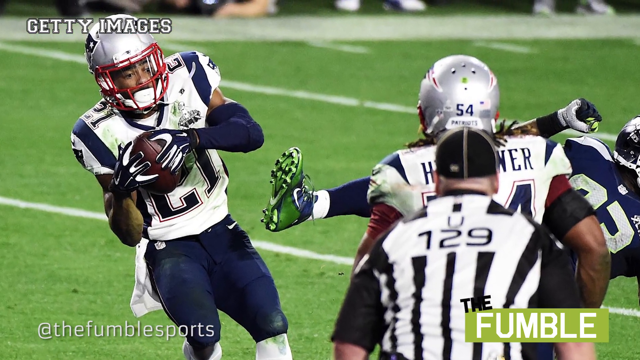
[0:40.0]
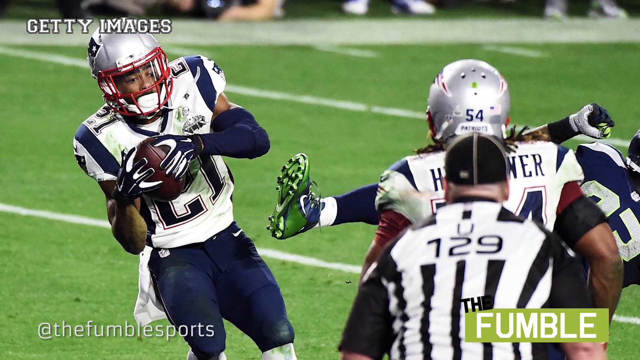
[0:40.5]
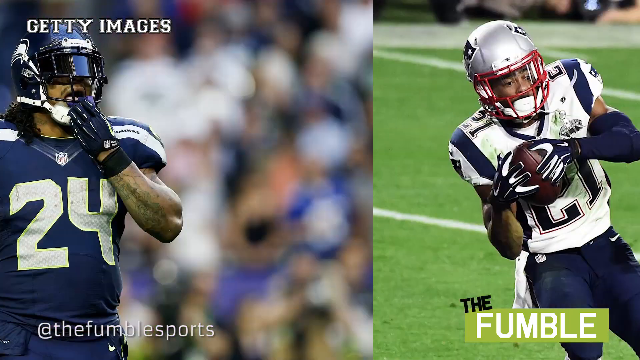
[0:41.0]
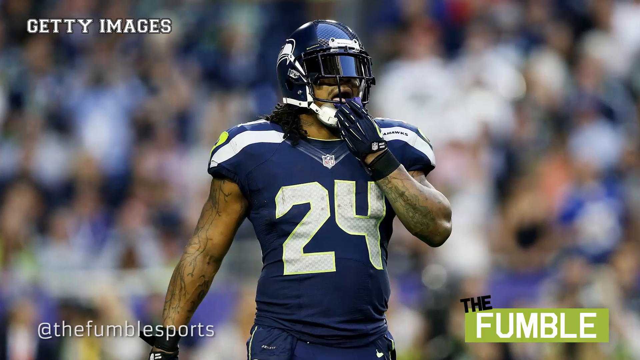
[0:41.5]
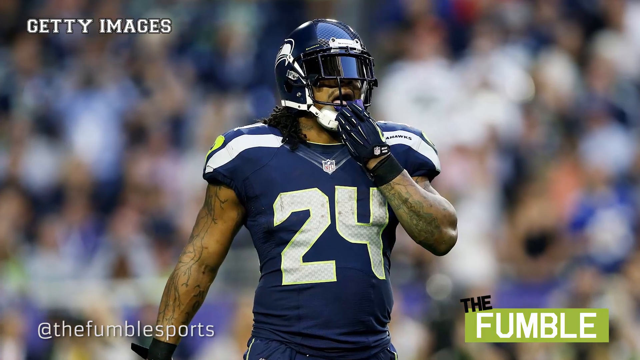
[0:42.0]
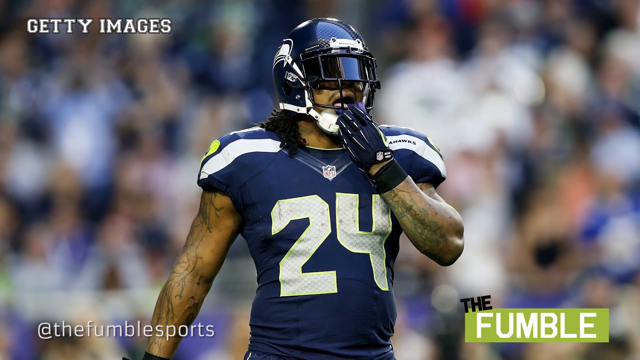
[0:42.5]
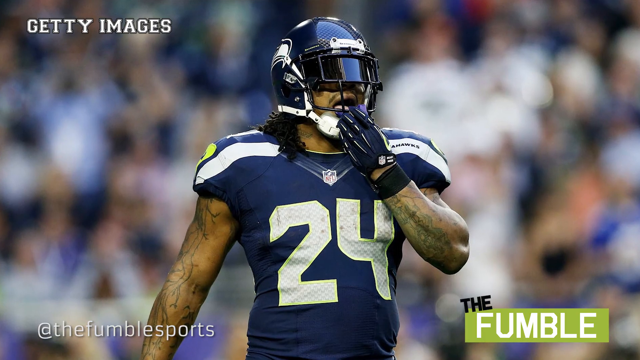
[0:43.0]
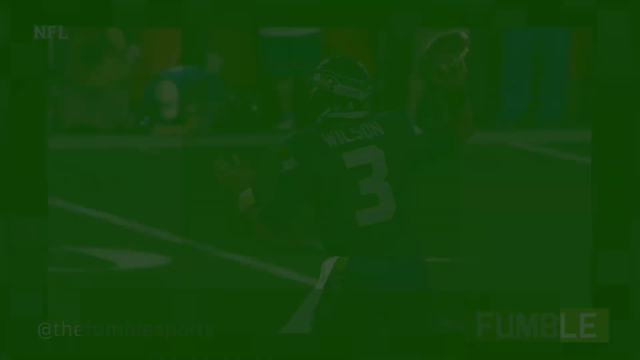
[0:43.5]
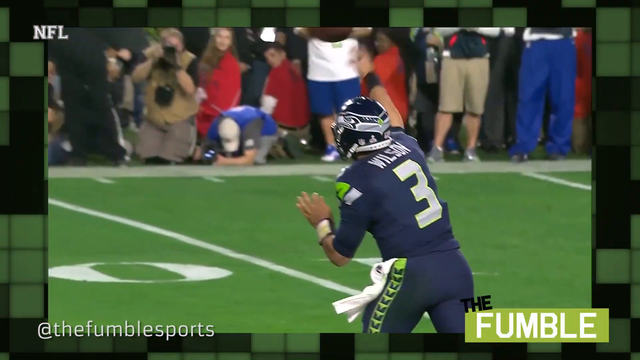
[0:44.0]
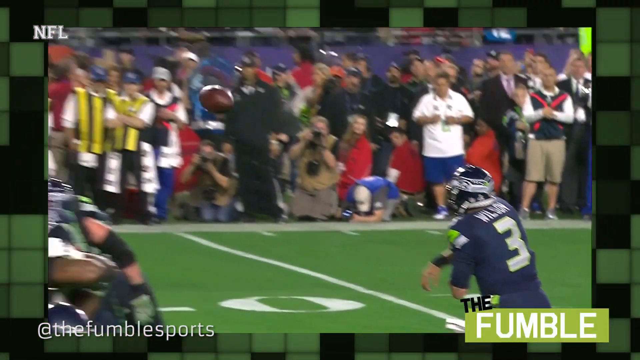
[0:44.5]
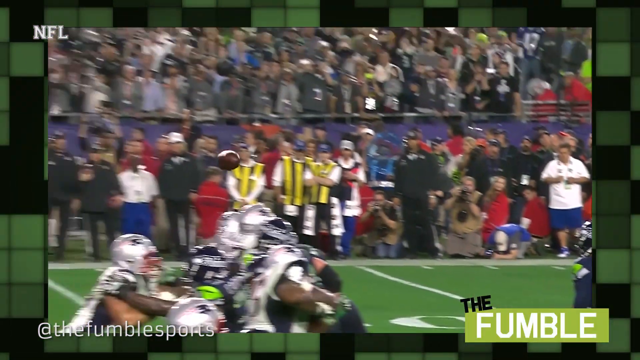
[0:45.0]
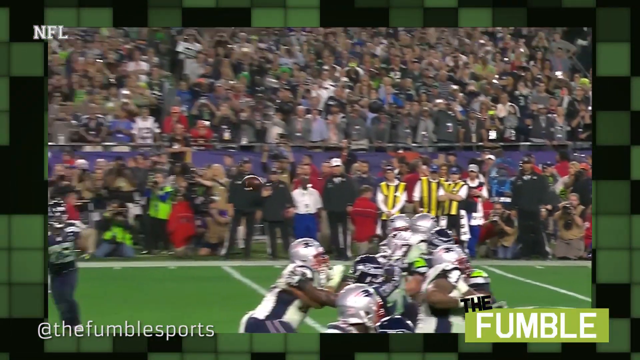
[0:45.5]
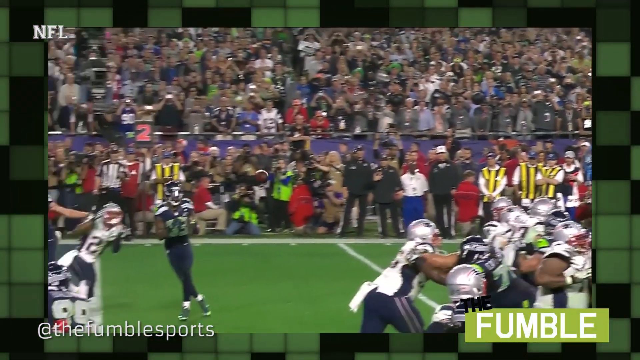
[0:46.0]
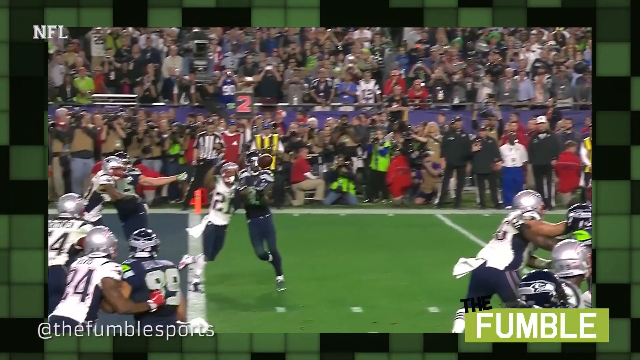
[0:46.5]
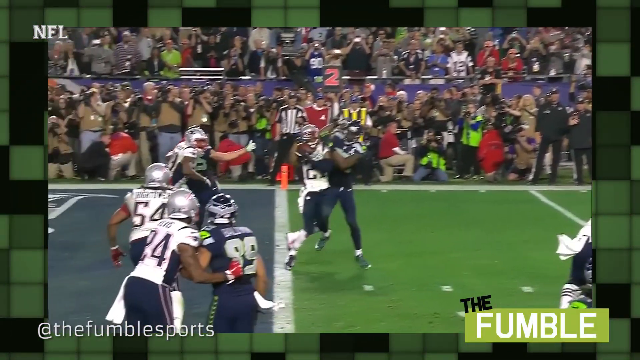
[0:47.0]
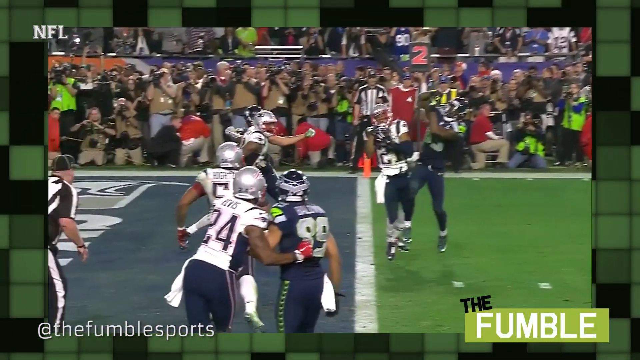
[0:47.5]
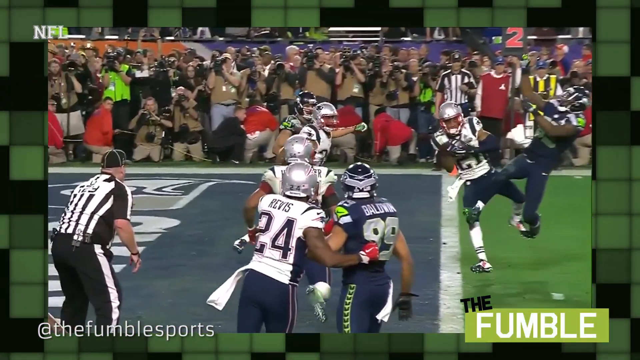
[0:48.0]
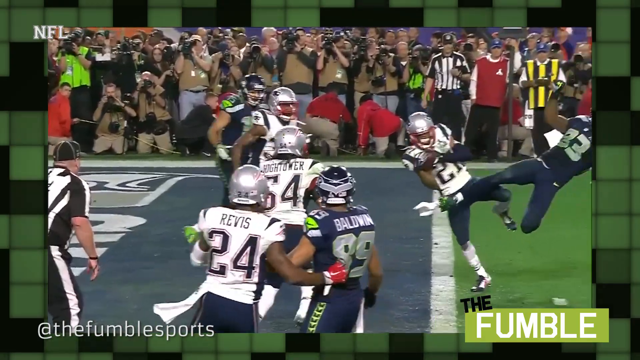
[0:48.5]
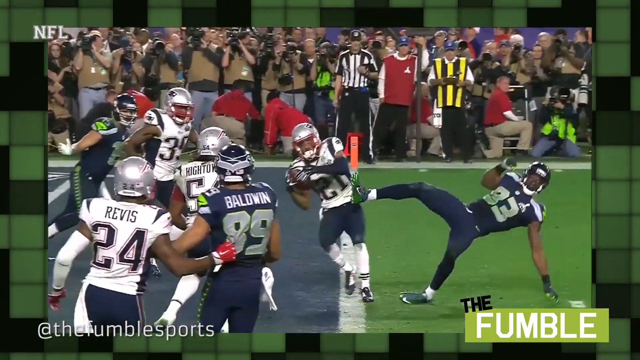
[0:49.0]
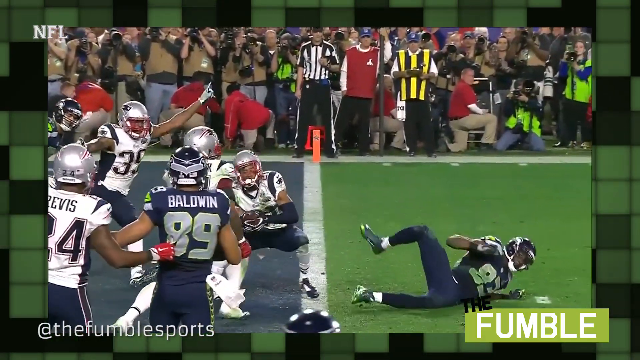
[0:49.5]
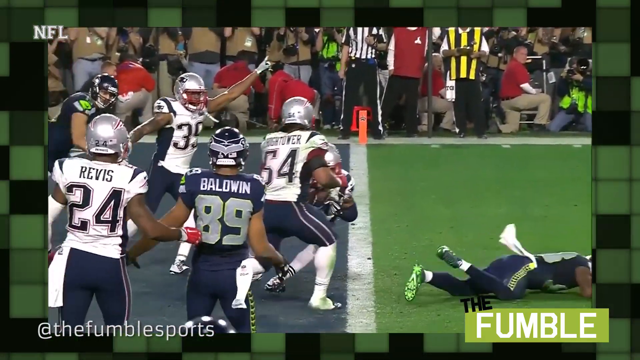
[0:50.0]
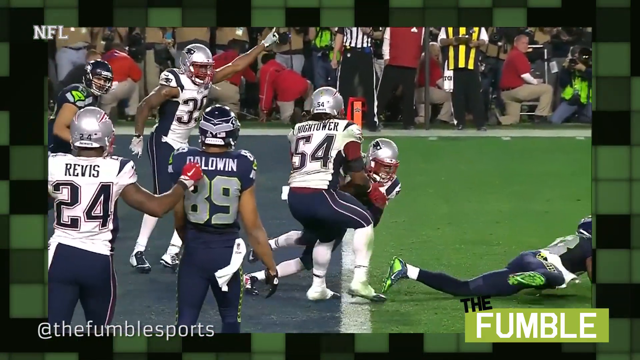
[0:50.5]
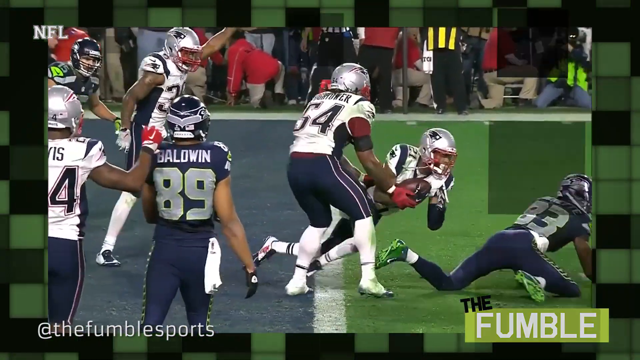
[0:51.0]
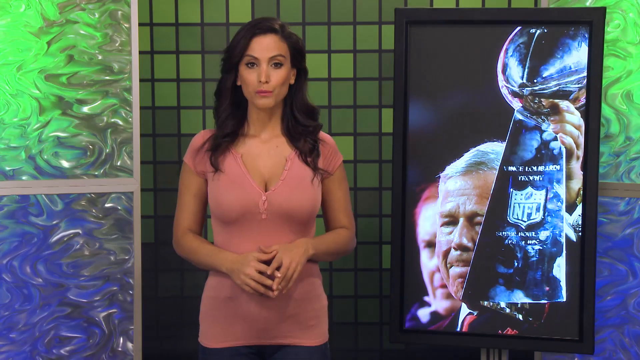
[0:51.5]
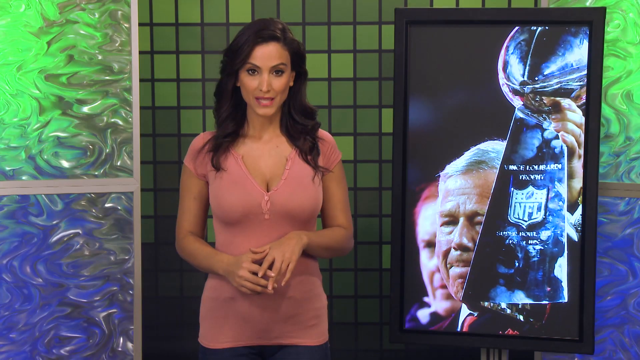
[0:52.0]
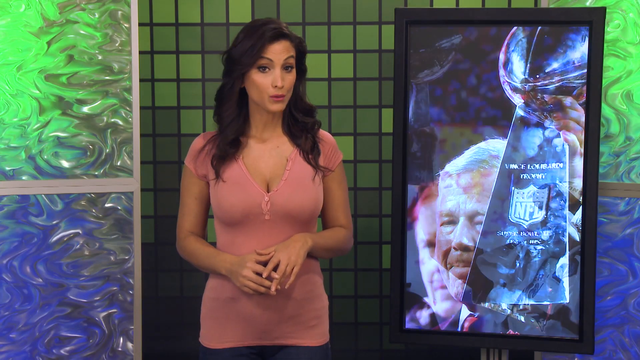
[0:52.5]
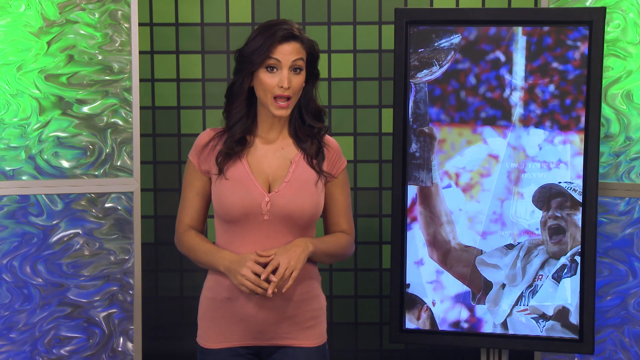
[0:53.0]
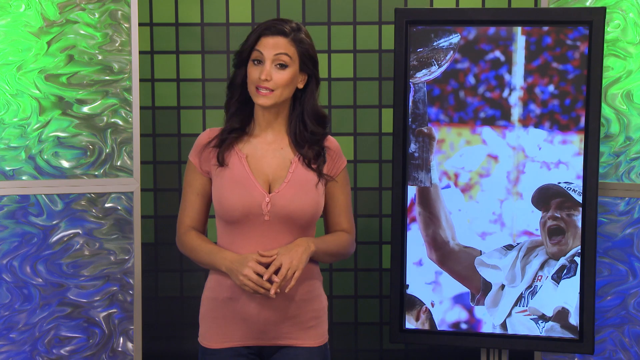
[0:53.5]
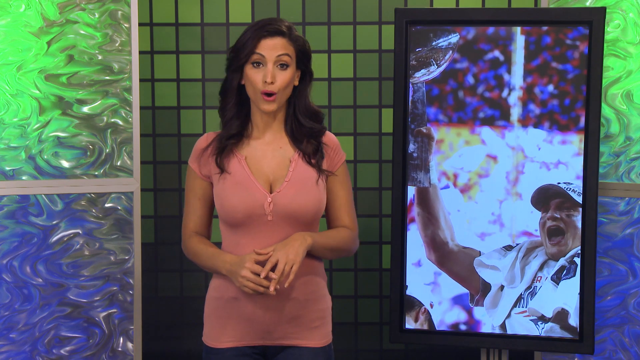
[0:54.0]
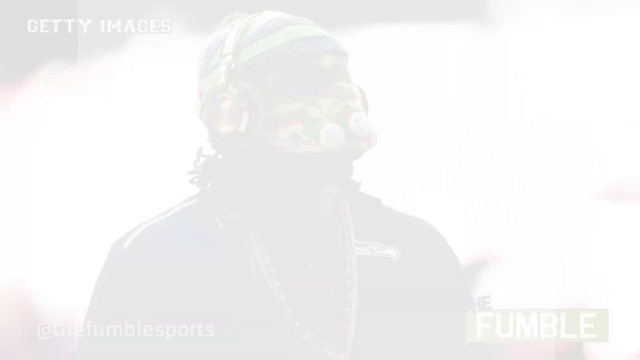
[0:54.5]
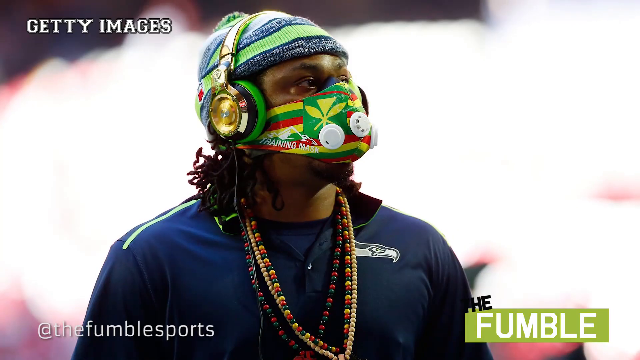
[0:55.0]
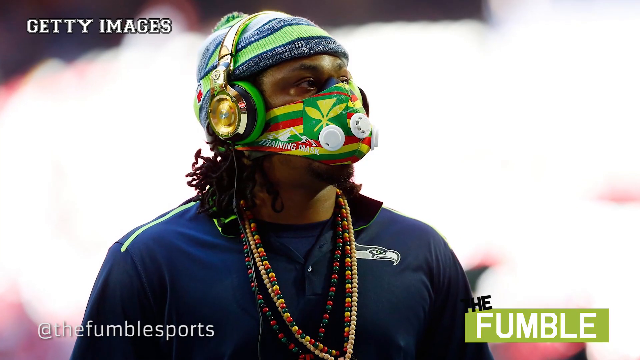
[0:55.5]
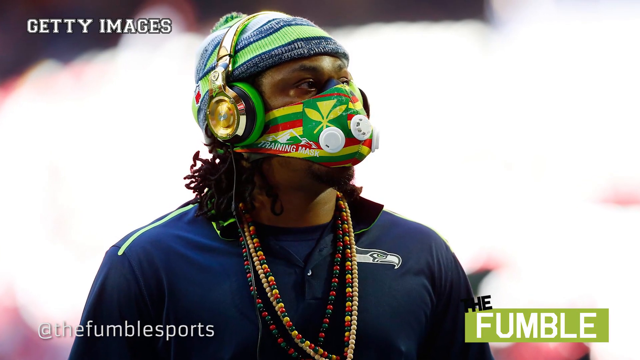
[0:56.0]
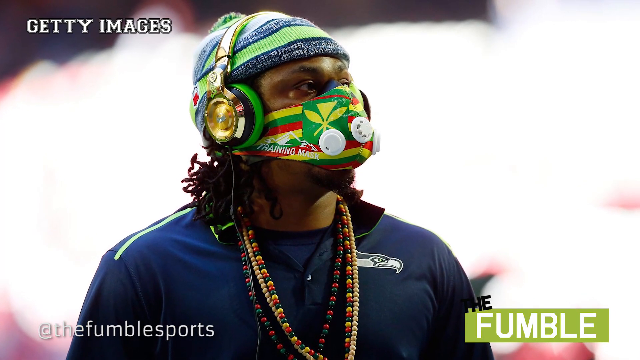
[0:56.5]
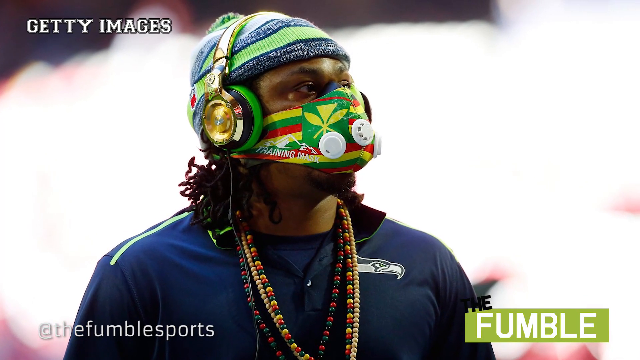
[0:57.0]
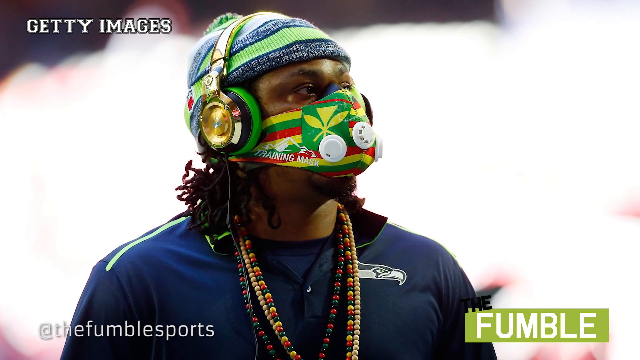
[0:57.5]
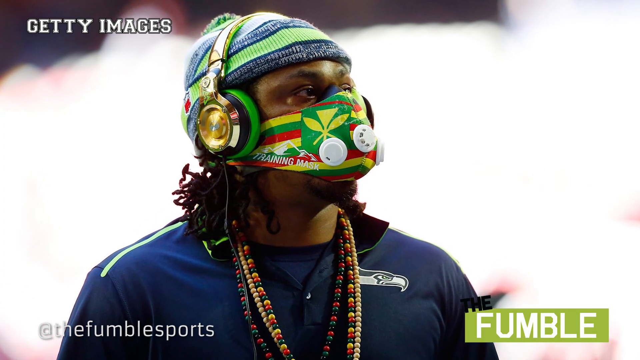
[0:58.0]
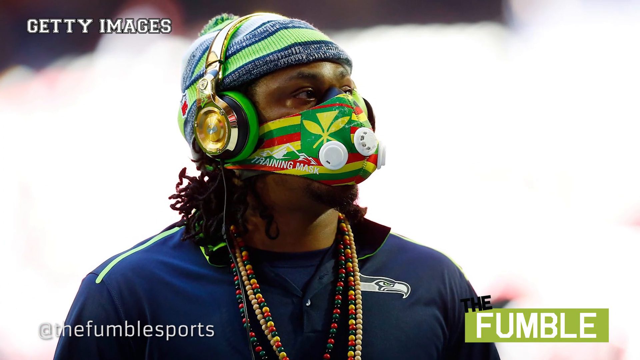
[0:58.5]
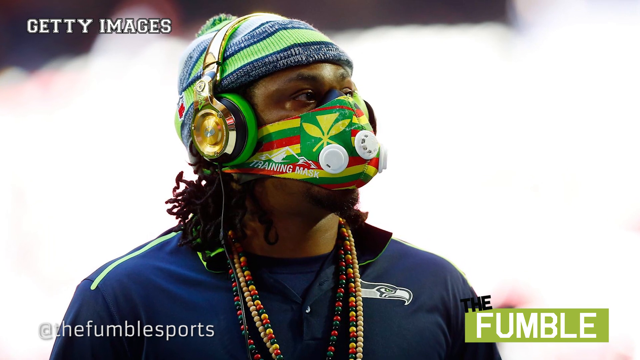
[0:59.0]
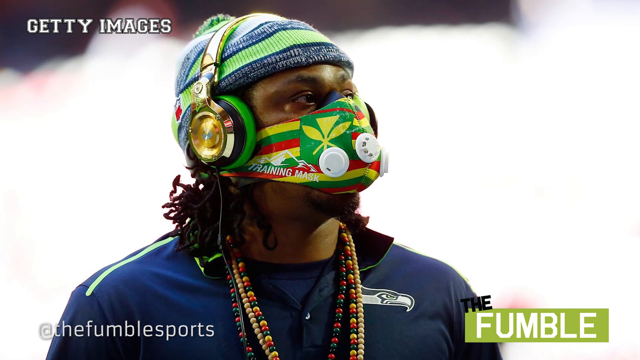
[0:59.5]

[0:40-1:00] New imagery shows Seahawks player number 24, apparently Marshawn Lynch, as the camera zooms in on him. He has his left glove raised toward the chin strap of his helmet and seems to be looking to his left with his mouth open; his right arm is by his side, and his helmet has a visor. Next, number 3, Russell Wilson of the Seattle Seahawks, throws a ball intended for Seahawks number 13, which is intercepted by Patriots number 21 before making his way to the end zone, just as the Seahawks were about to score. The Patriots player then falls to the ground. The camera cuts back to the female reporter, who continues talking in the same position as before. The image on the right shows a Patriots player holding a trophy, then changes to a Seahawks player wearing a mask, with what look like necklaces made of African beads on his neck. The camera slowly zooms in on him.